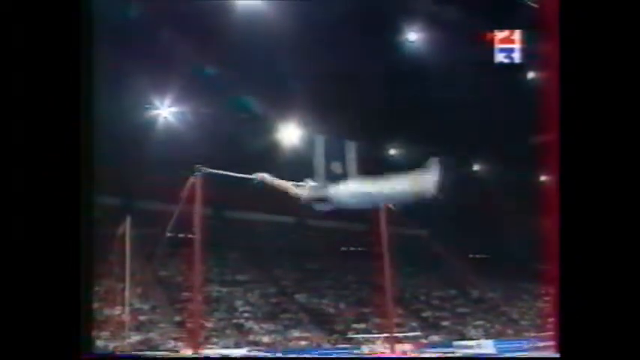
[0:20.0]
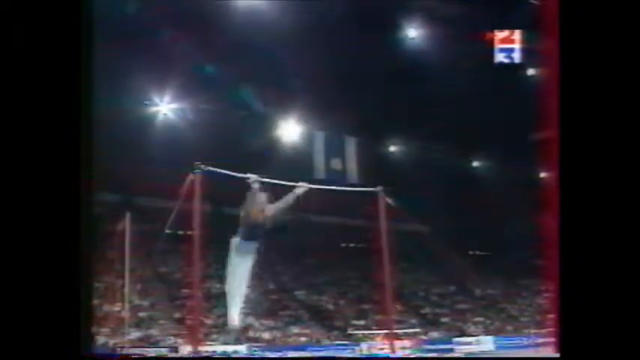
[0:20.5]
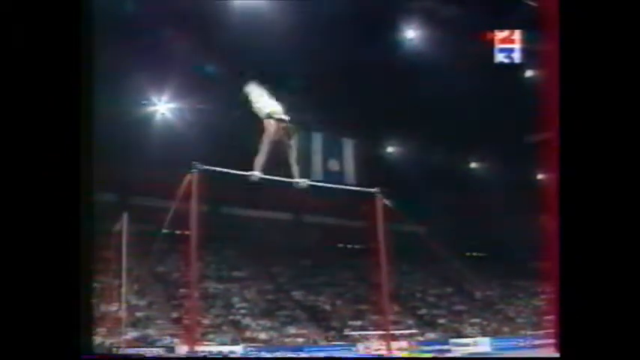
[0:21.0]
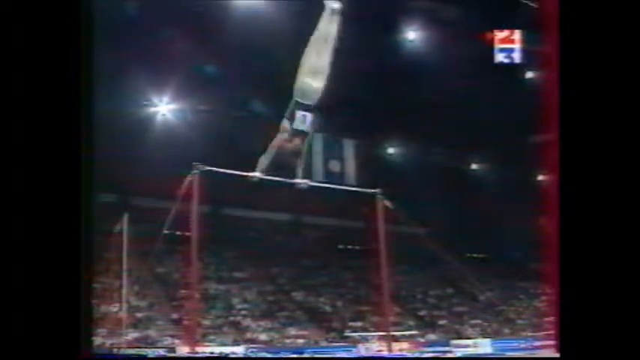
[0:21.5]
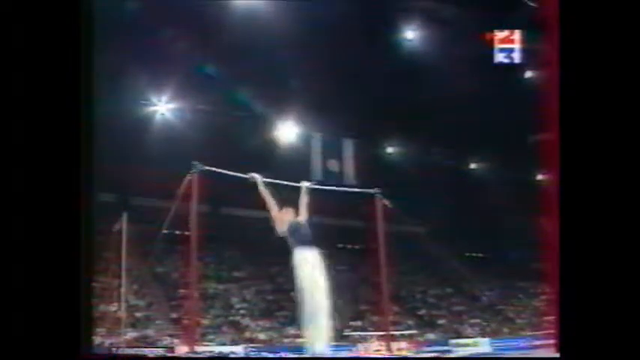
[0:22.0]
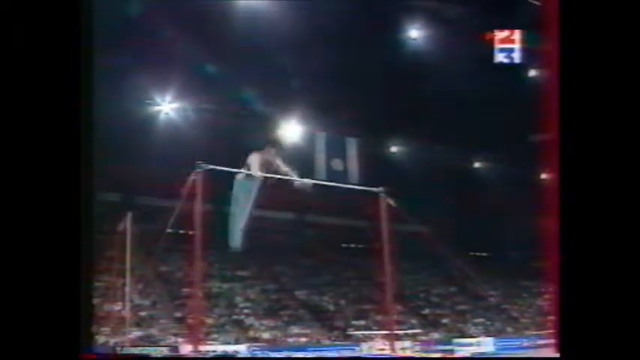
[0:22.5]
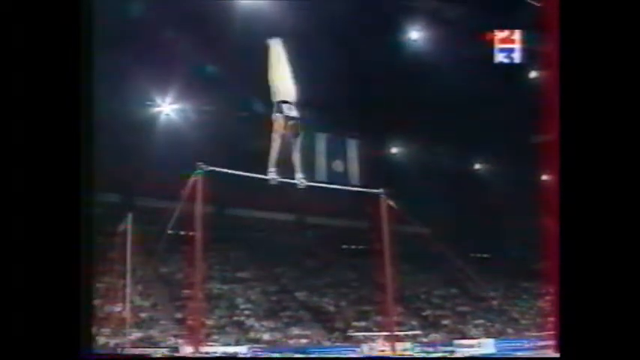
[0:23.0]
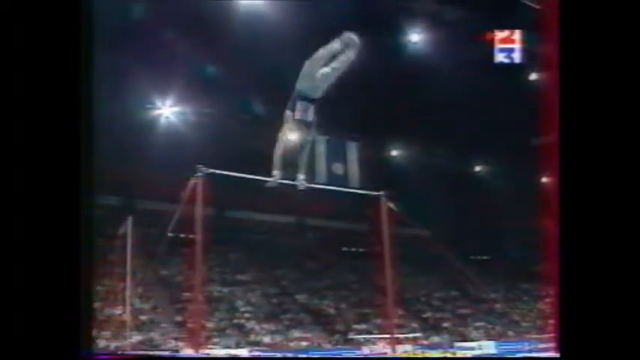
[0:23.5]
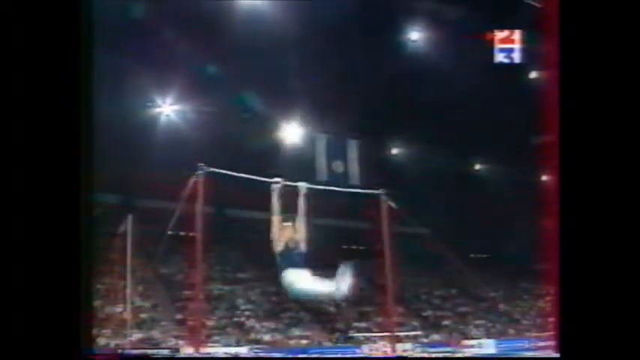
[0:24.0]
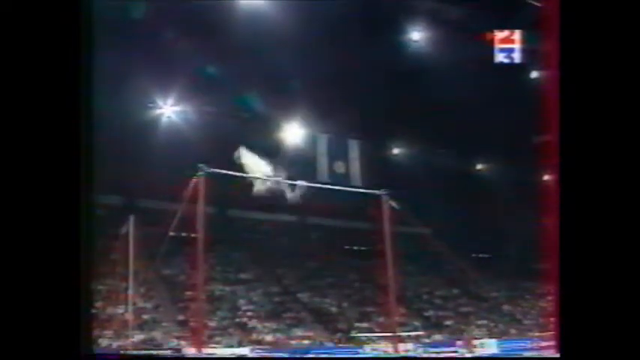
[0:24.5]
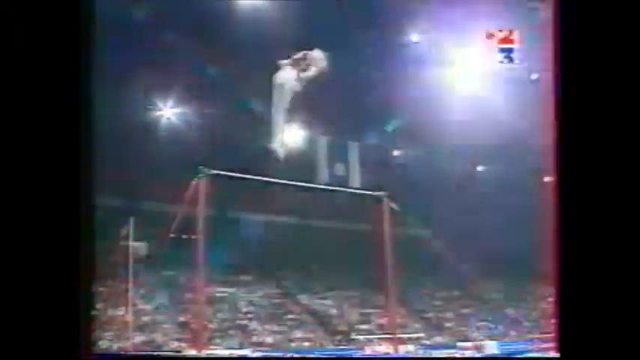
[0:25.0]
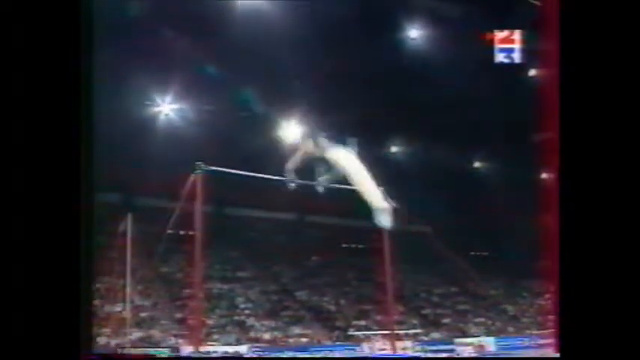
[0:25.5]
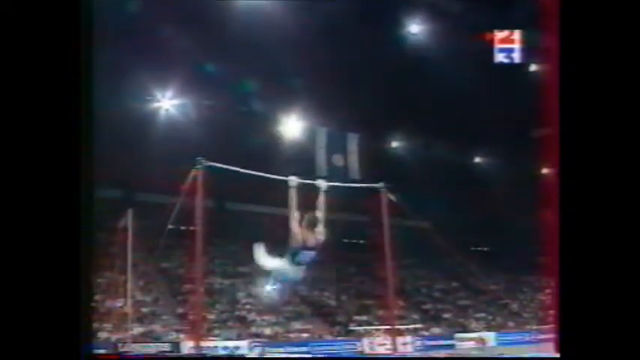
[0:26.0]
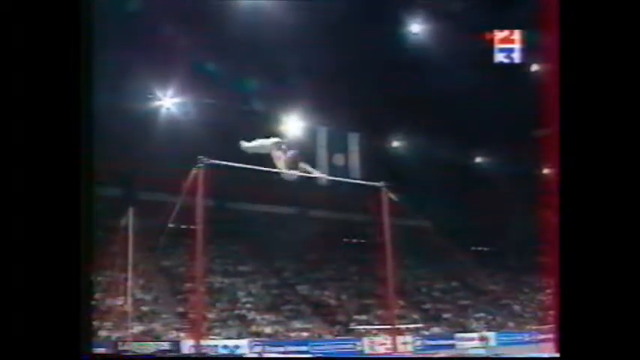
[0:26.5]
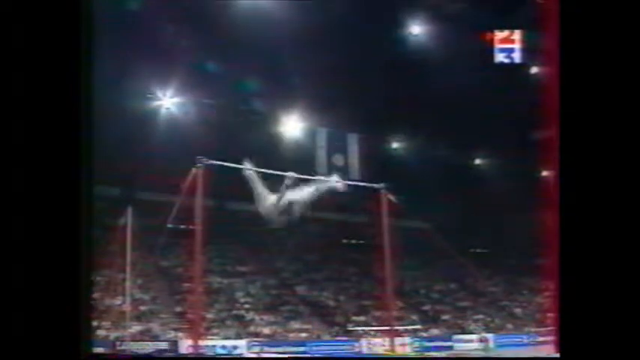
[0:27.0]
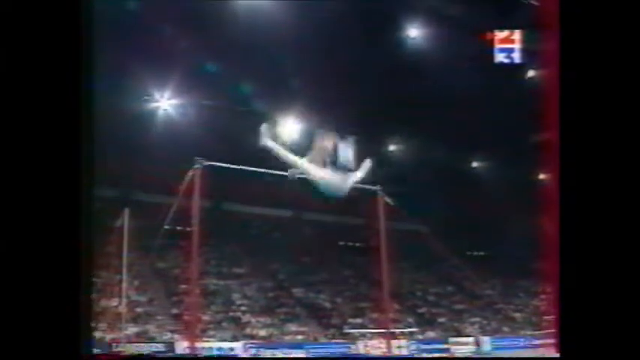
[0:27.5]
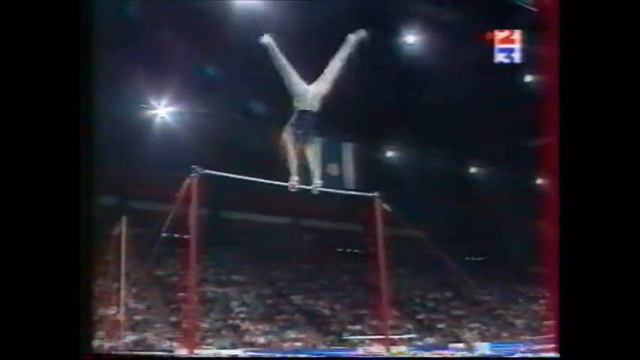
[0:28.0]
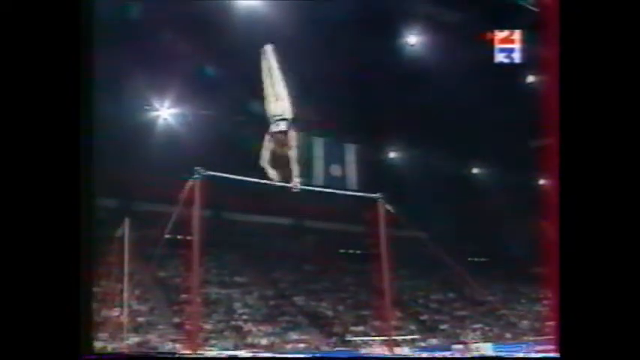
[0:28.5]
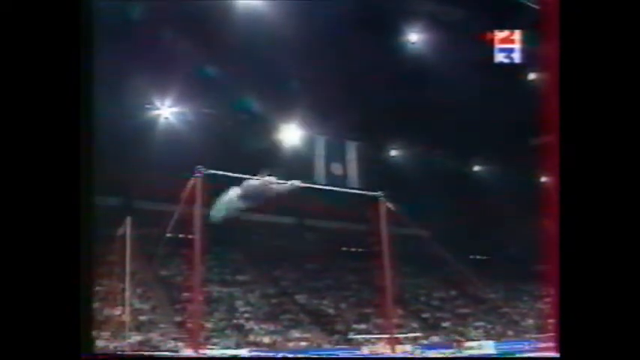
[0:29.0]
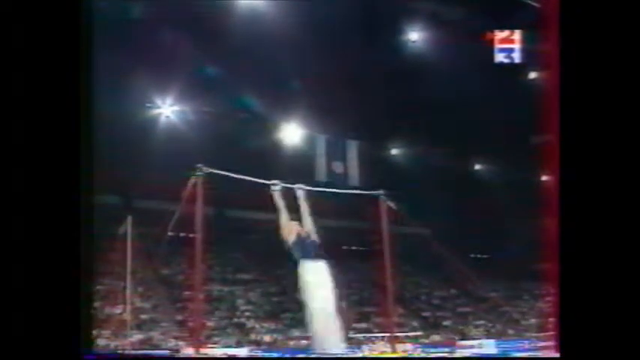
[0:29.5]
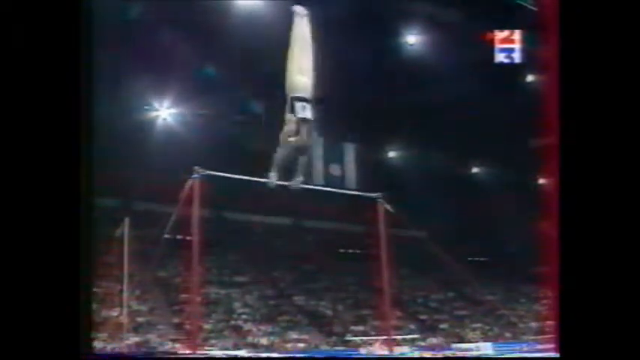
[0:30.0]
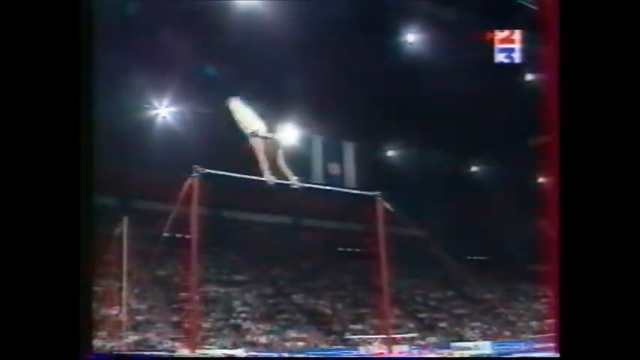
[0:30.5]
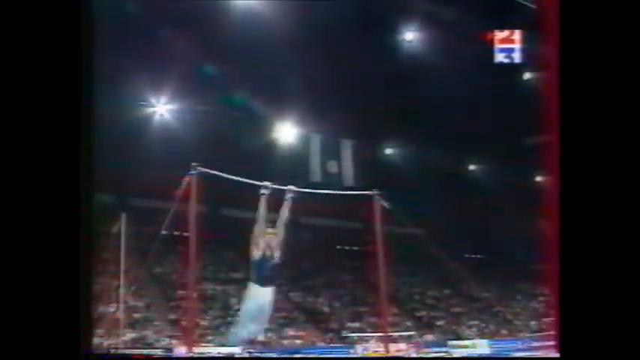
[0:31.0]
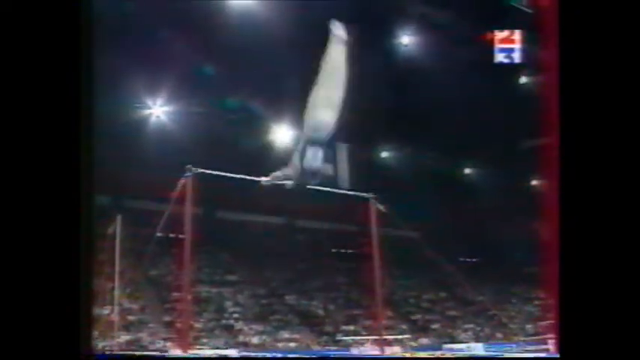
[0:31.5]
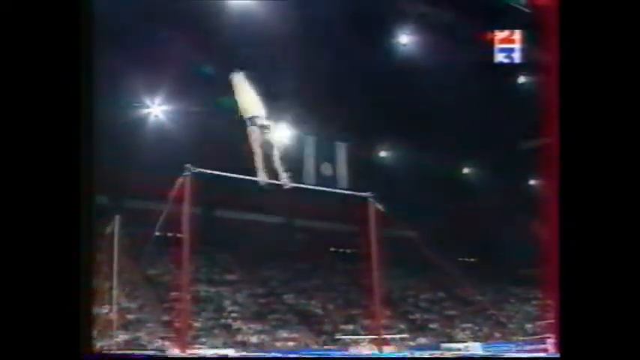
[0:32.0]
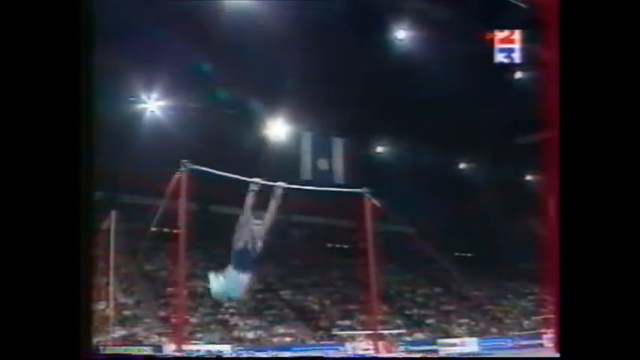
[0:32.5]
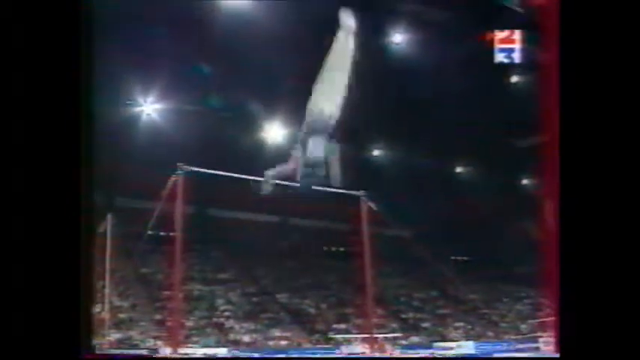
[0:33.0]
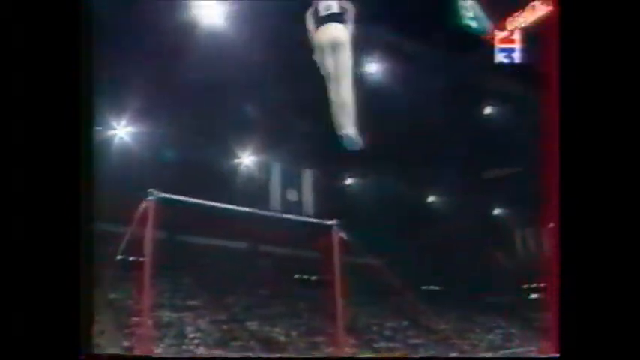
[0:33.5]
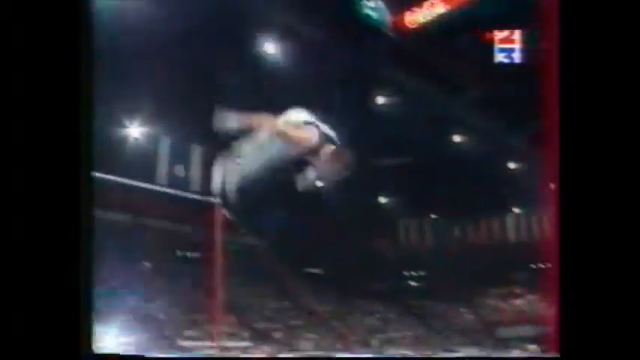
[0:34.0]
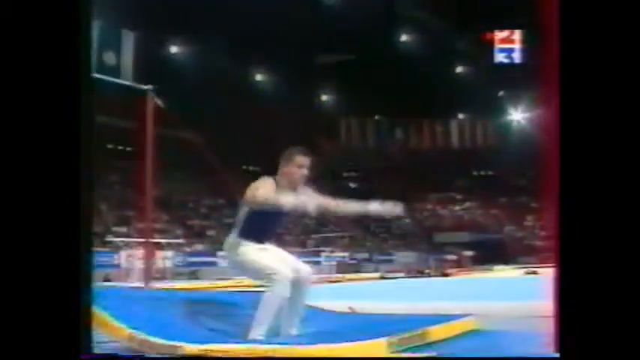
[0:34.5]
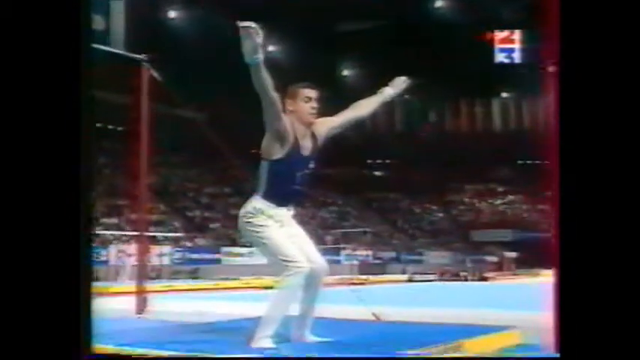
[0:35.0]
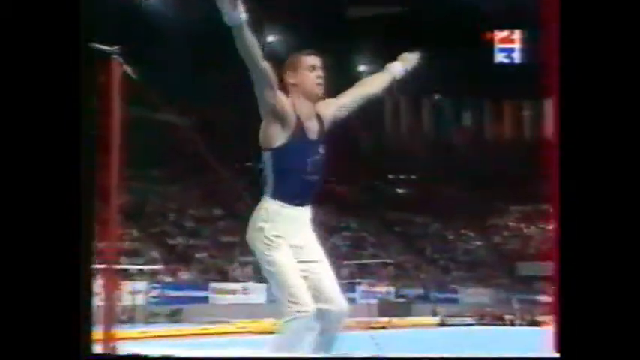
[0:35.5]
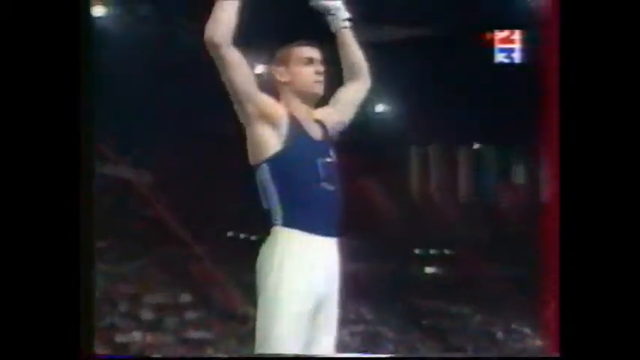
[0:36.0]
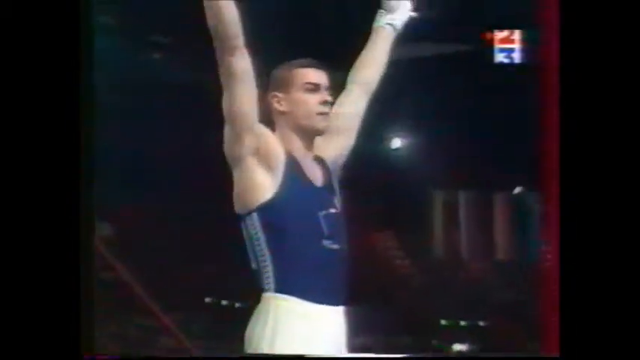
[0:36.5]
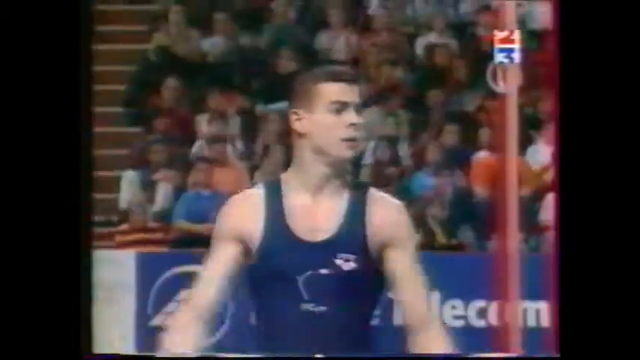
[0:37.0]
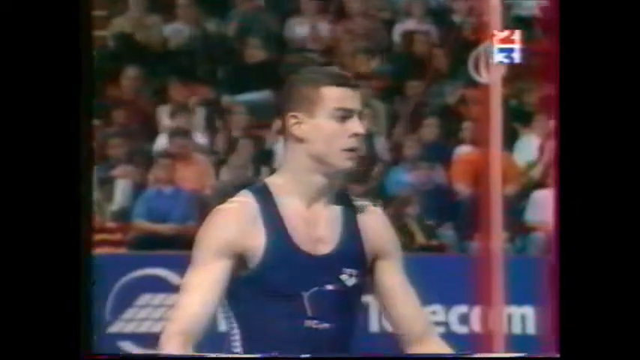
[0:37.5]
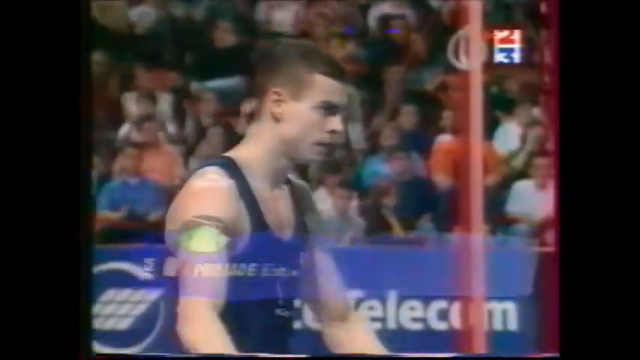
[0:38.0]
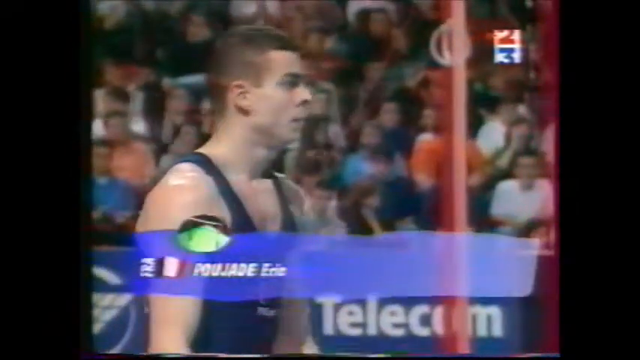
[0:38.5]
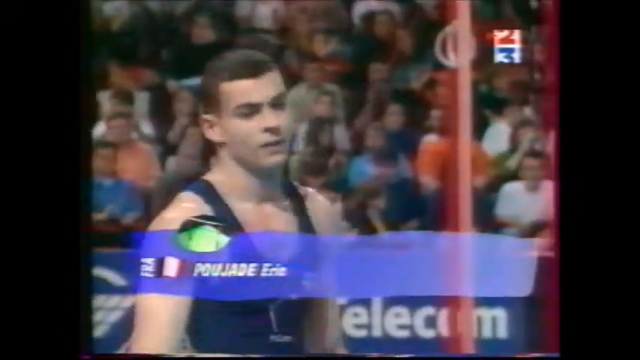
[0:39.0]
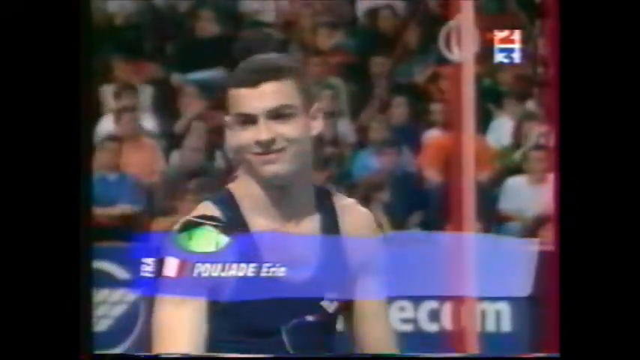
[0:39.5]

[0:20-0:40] At a gymnastics competition, a male athlete performs on the bar, spinning around it while facing the same way as the camera. He spins again and flips up, now facing the opposite way, and catches the bar. He goes backwards with his legs apart, ends up in a handstand, then pivots so his face is once again toward the camera as he swings forward. He swings forward twice, then a third time, goes up into the air, spins twice in the air and lands perfectly, punching into the air in celebration. He has white skin and short black hair and wears a blue top. The audience claps. His name comes up in yellow at the bottom of the screen, identifying him as Aaron from France, with a little French flag next to his name. He smiles as he starts to walk off the mat.